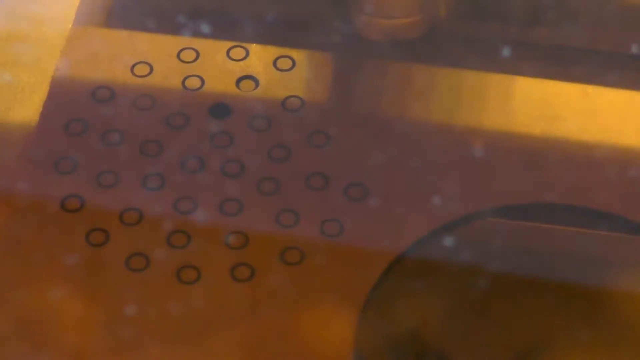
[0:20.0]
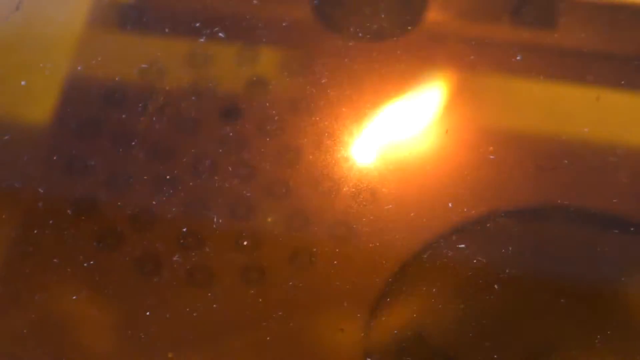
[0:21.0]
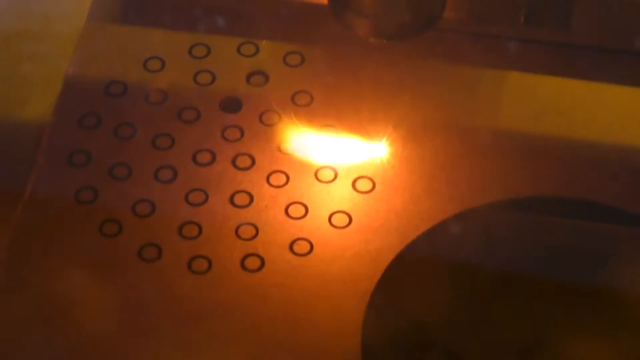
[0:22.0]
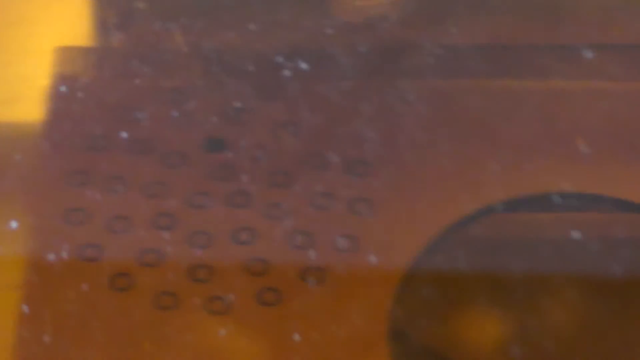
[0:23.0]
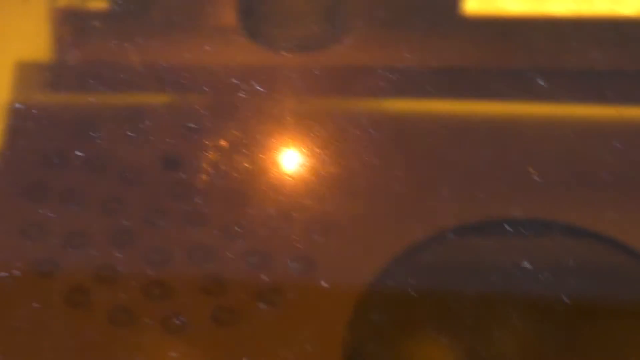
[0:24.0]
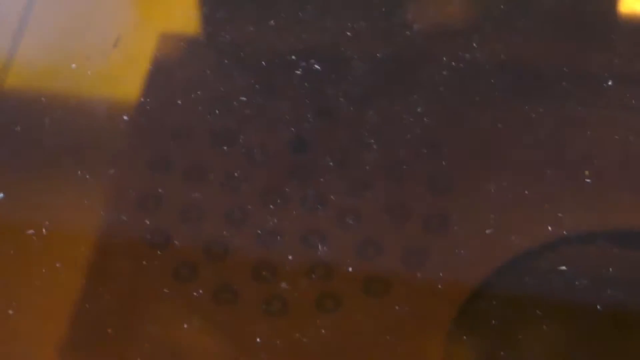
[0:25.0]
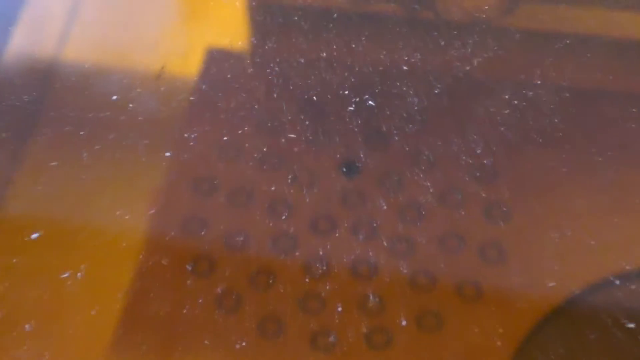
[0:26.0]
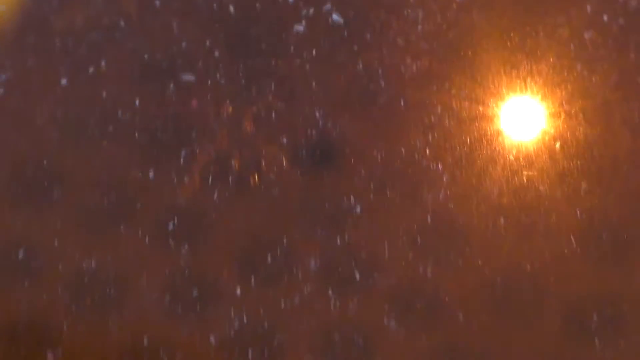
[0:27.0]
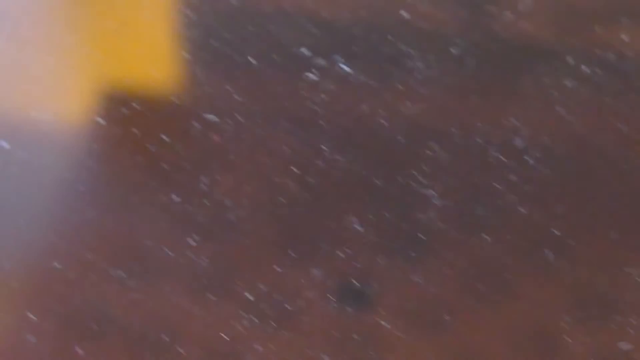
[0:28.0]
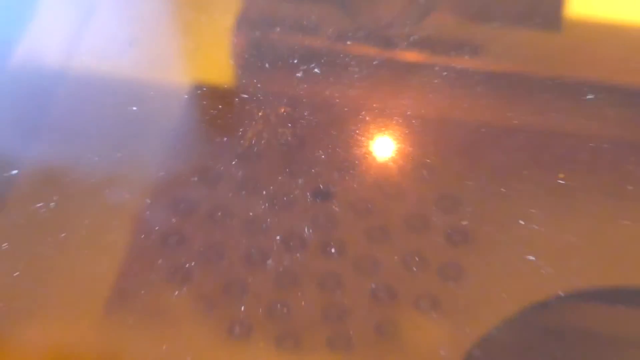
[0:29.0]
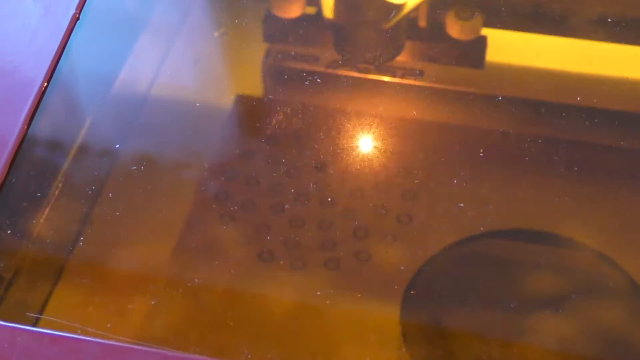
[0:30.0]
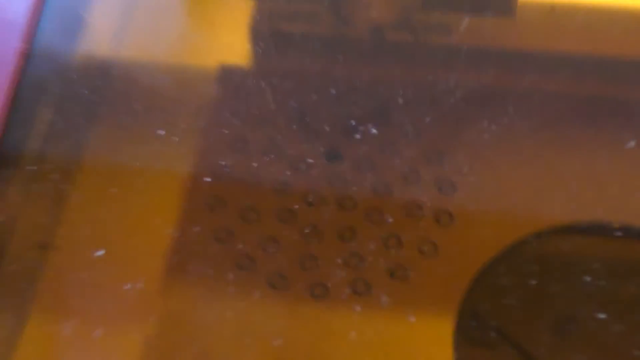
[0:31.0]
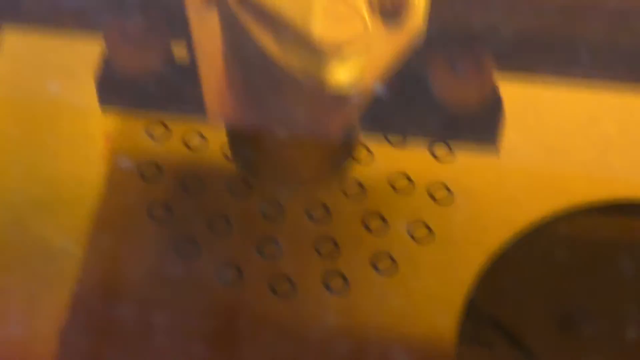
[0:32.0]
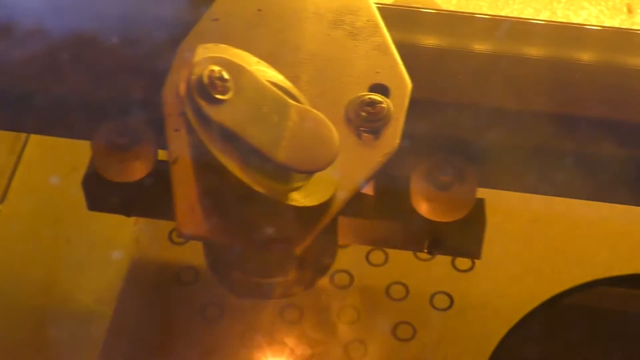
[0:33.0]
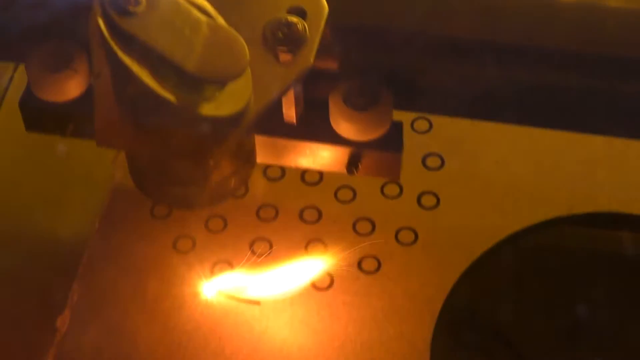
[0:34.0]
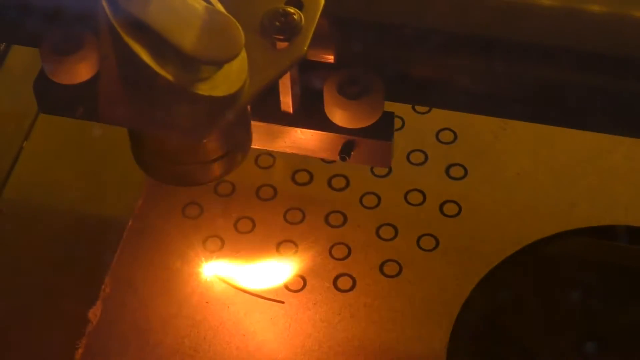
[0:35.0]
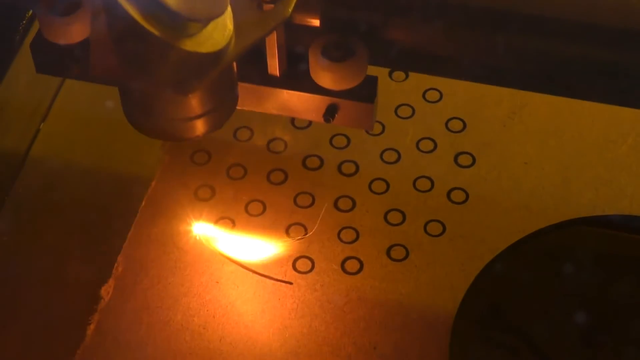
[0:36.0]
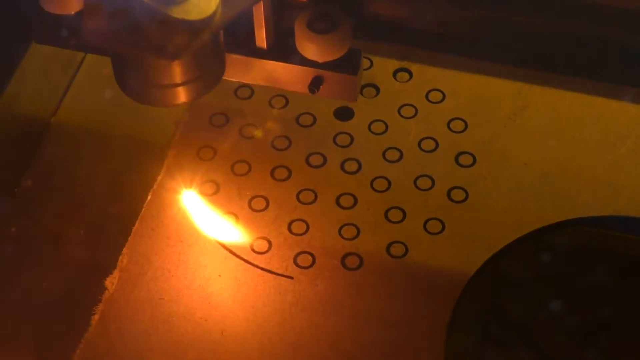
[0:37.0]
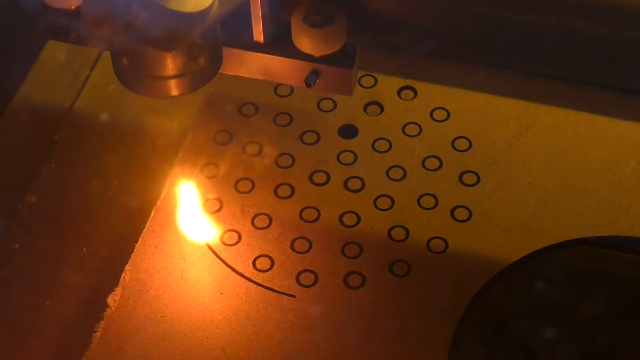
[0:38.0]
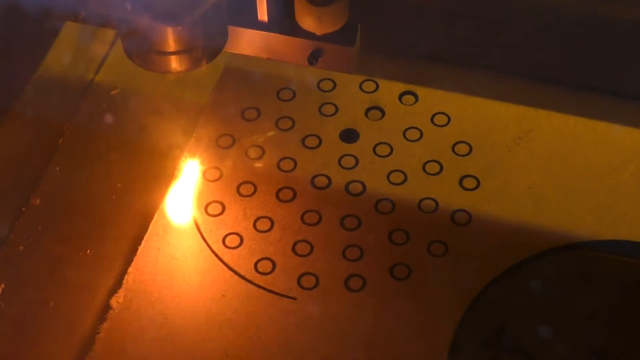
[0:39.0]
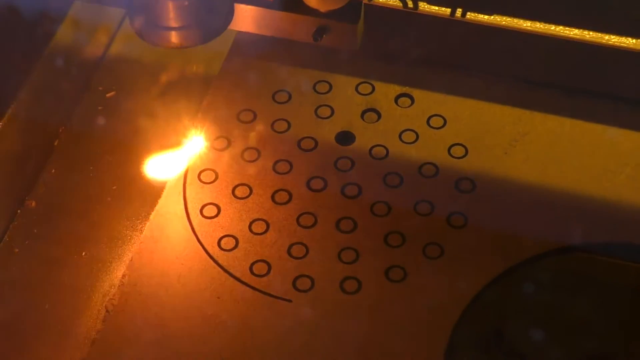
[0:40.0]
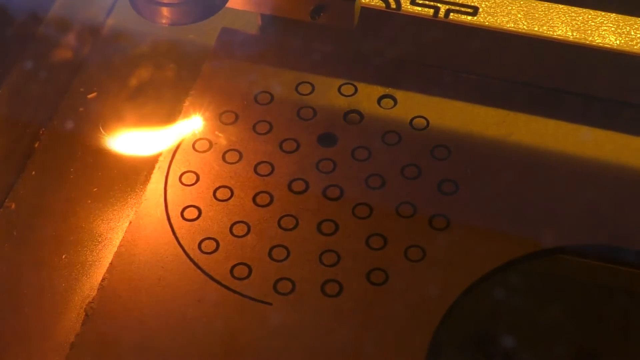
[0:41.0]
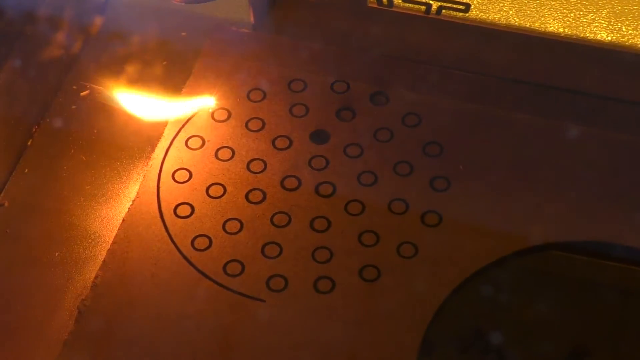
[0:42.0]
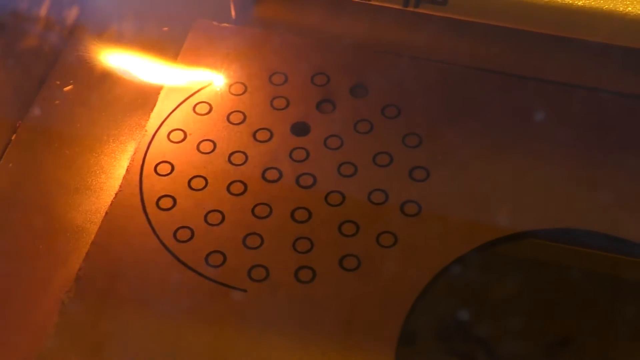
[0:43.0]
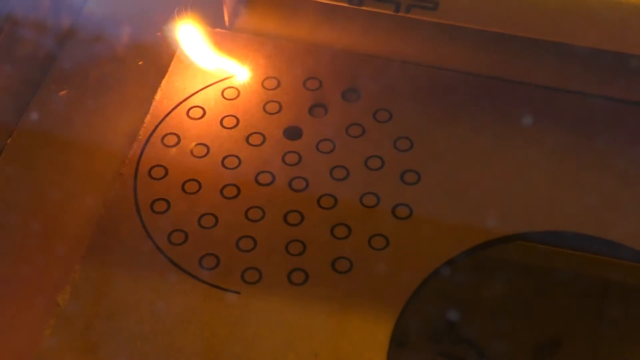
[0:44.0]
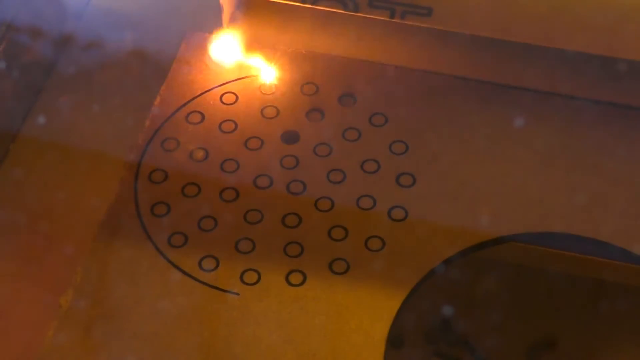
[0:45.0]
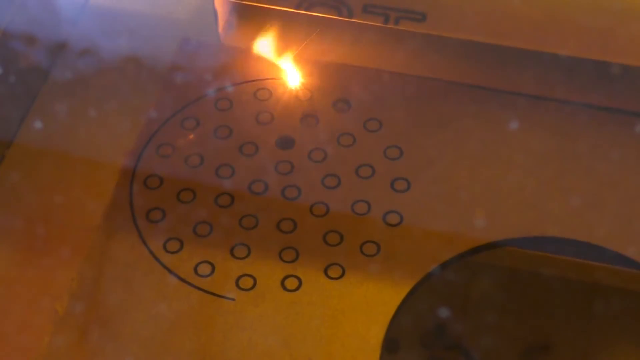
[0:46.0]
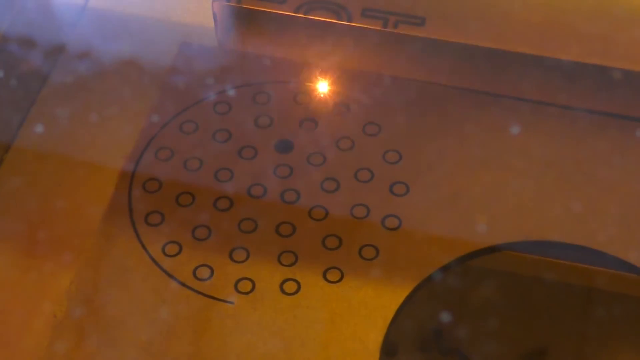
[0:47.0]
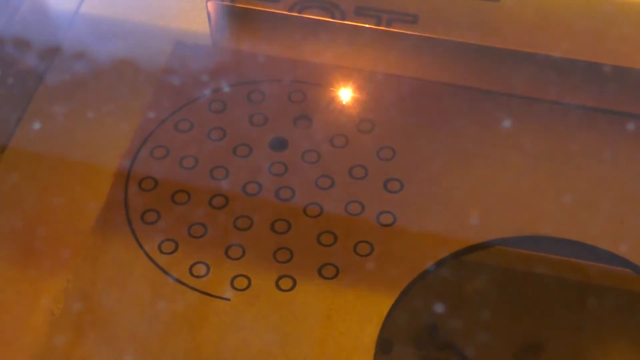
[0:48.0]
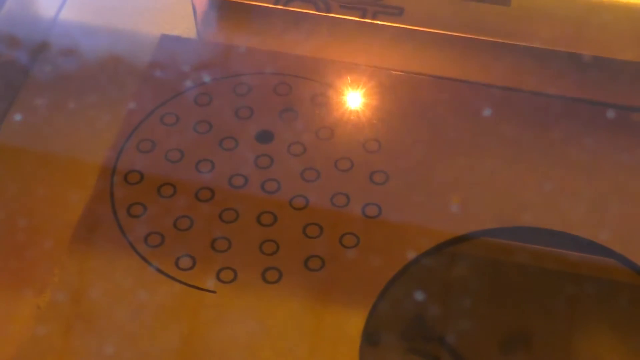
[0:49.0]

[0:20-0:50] There seems to be a glass cover on top of the engraving machine or laser cutter. The process changes: the laser now goes around the small circles, creating a bigger outer circle. Moving round and round from one corner to the next while keeping the small circles in the middle, it forms one big boundary circle that encloses all the tiny circles etched earlier.